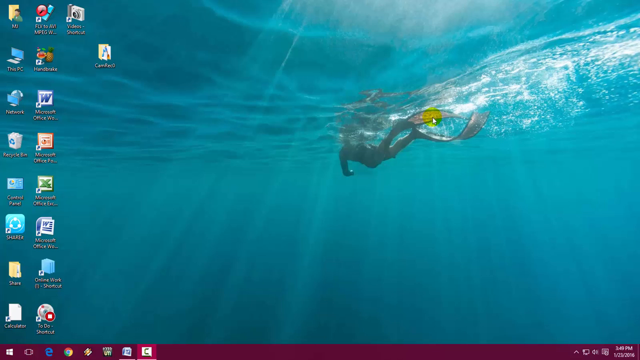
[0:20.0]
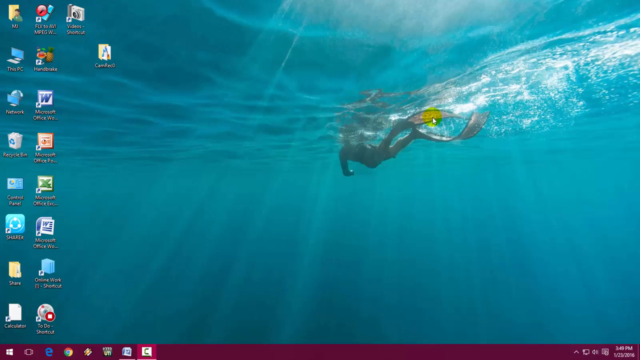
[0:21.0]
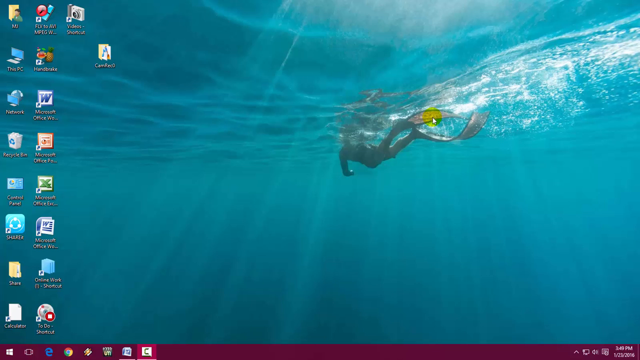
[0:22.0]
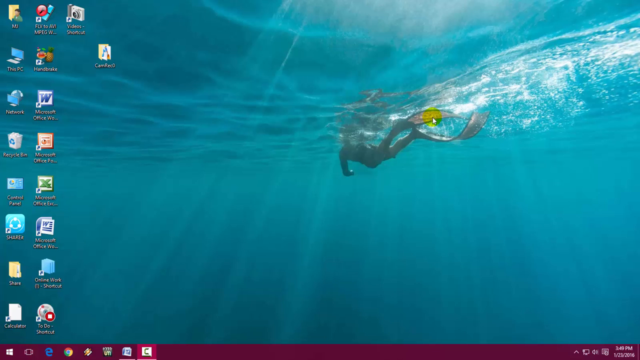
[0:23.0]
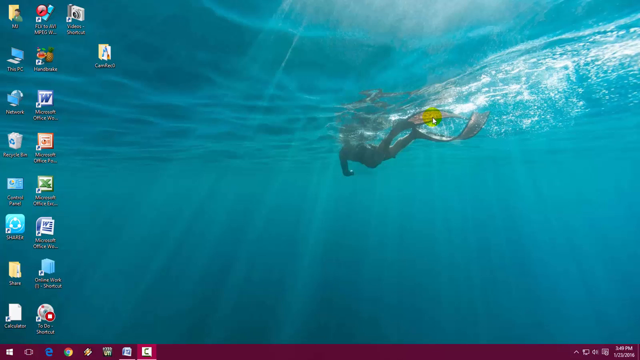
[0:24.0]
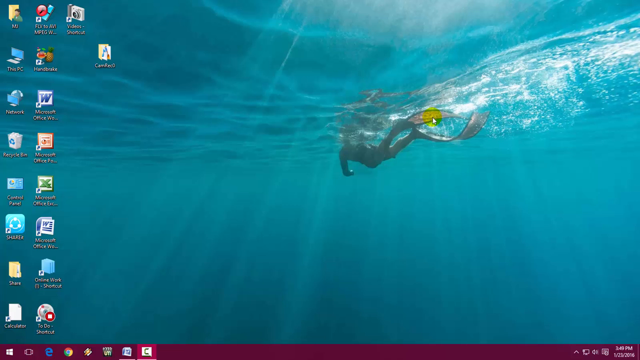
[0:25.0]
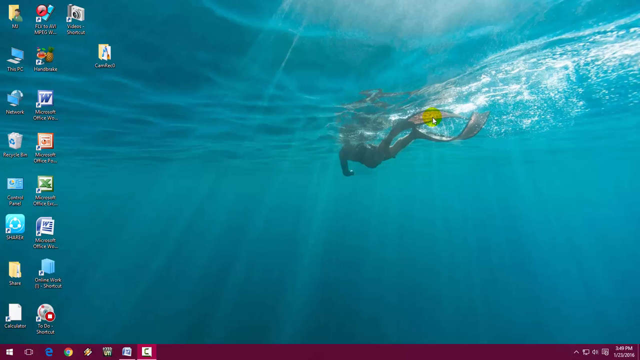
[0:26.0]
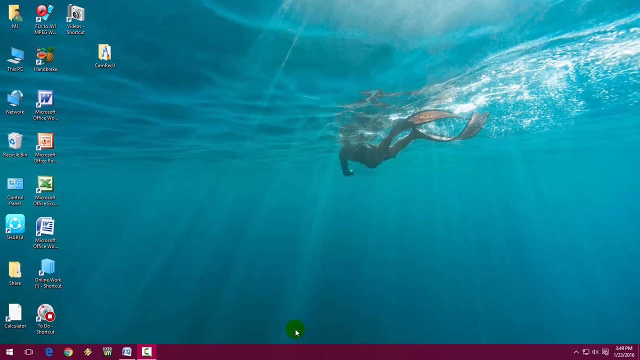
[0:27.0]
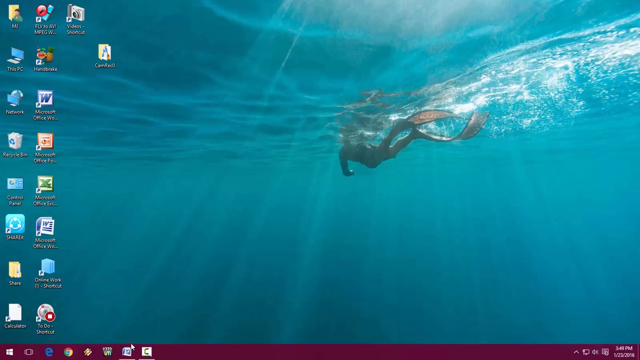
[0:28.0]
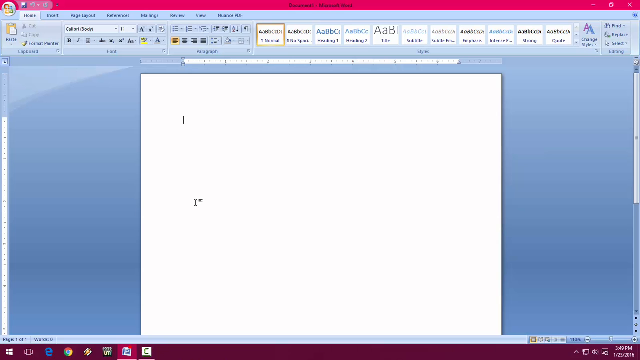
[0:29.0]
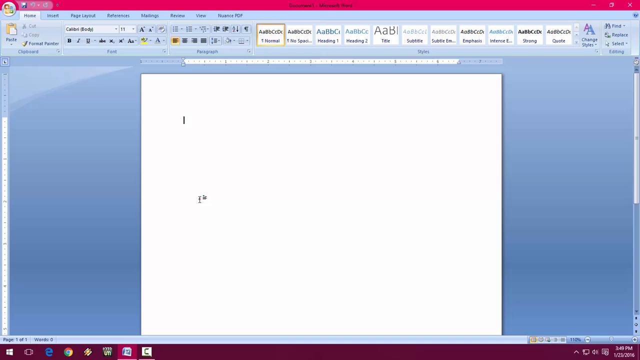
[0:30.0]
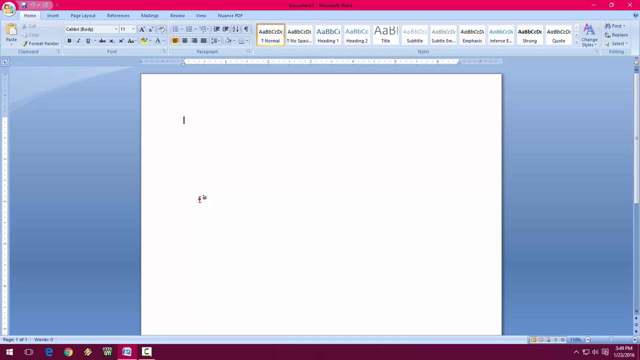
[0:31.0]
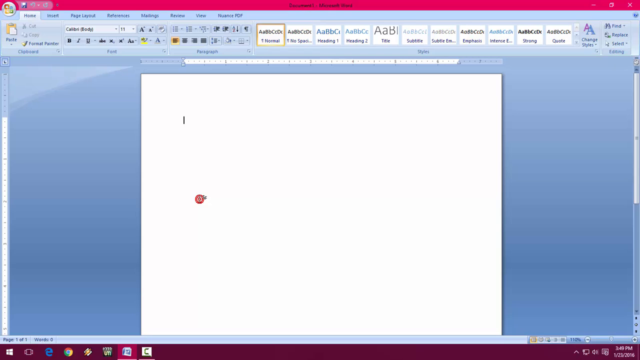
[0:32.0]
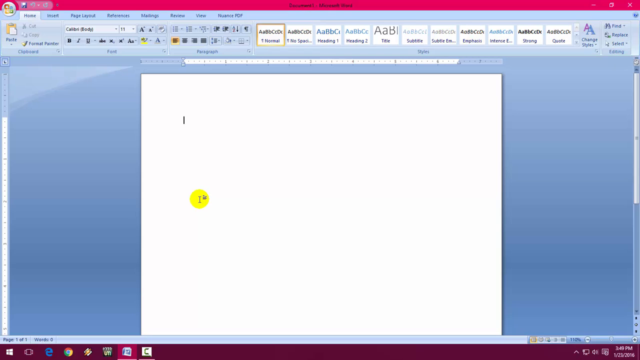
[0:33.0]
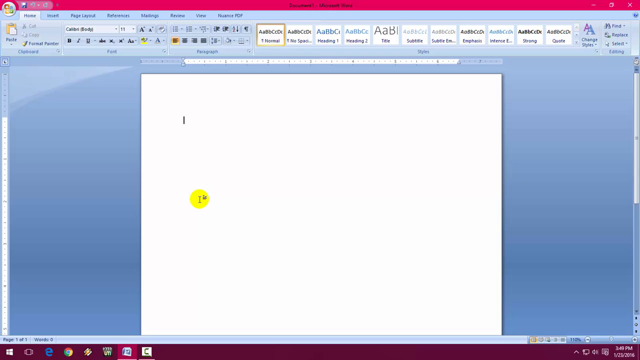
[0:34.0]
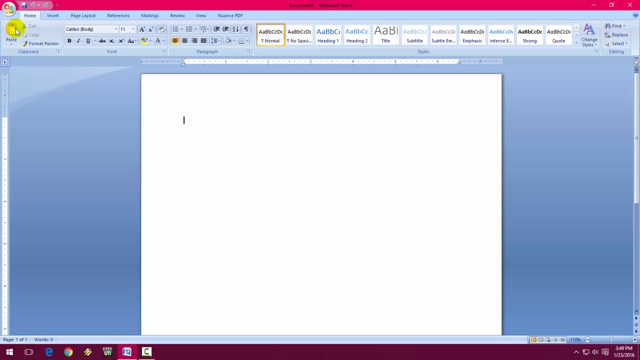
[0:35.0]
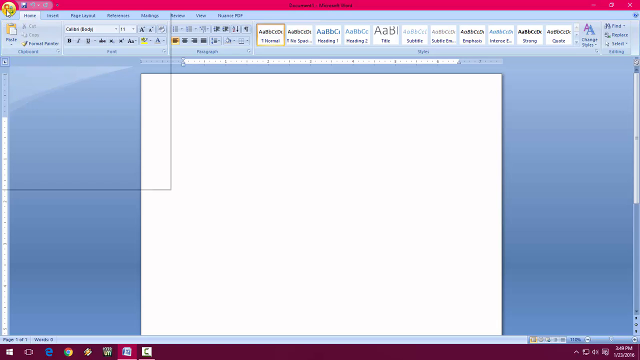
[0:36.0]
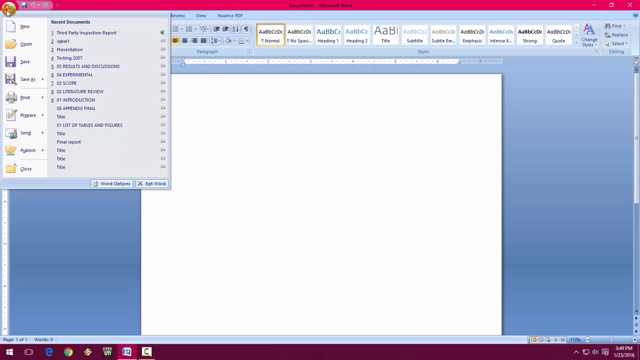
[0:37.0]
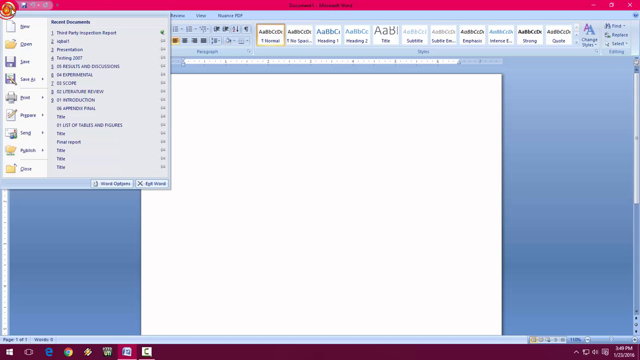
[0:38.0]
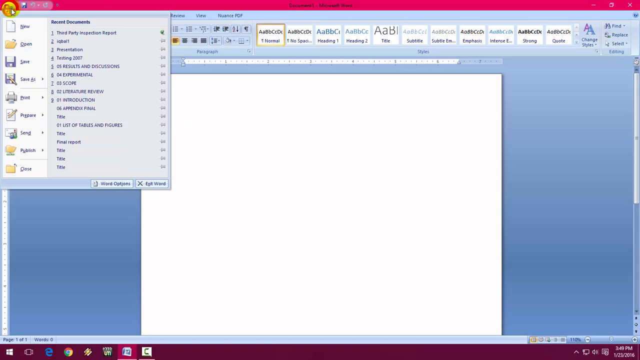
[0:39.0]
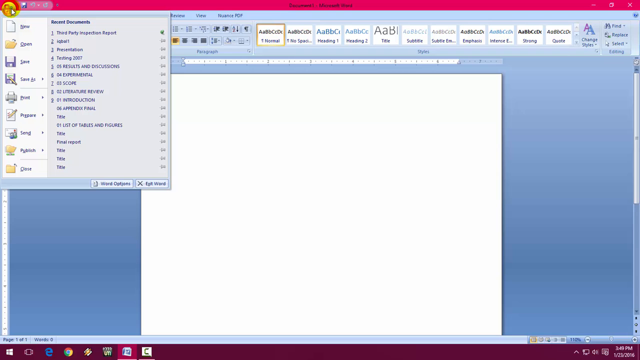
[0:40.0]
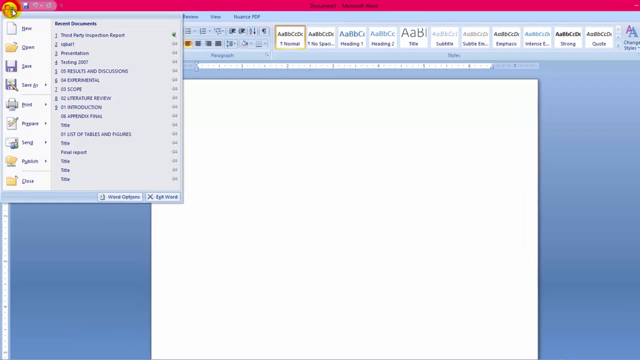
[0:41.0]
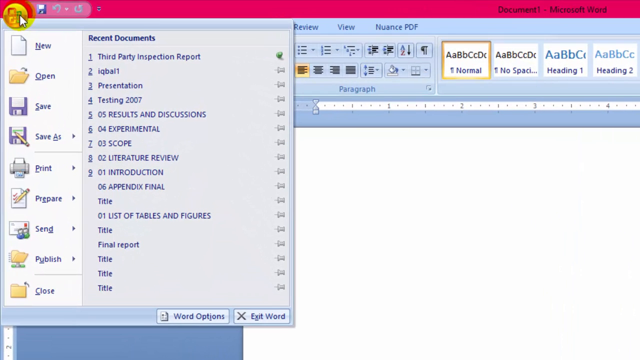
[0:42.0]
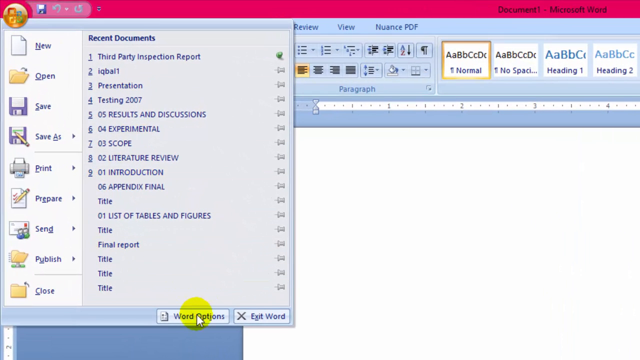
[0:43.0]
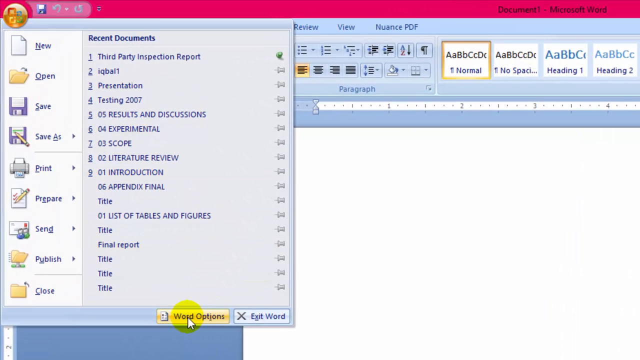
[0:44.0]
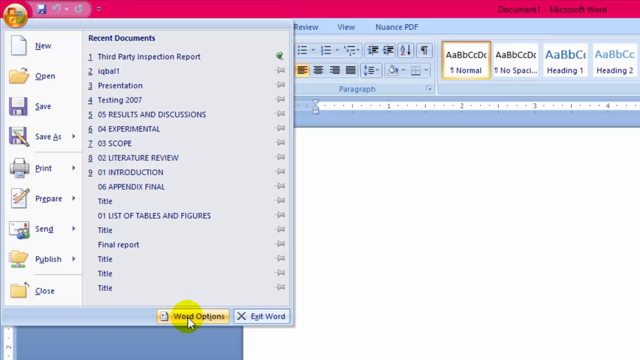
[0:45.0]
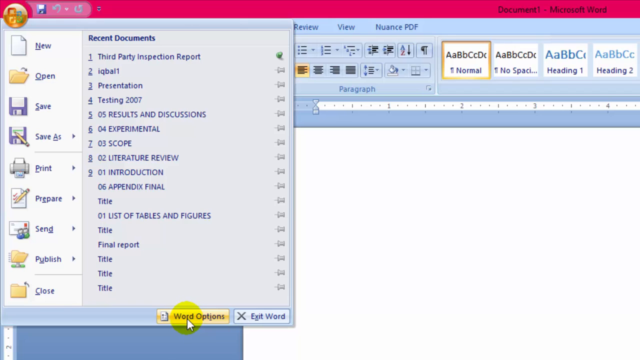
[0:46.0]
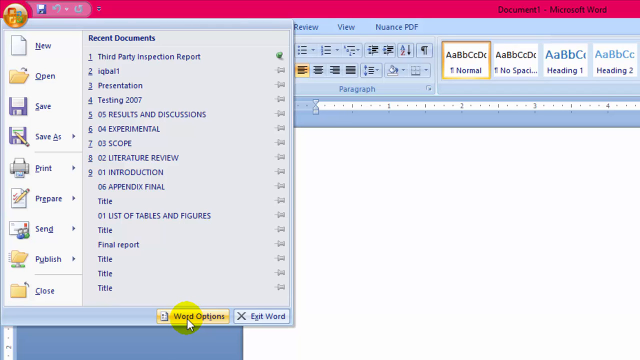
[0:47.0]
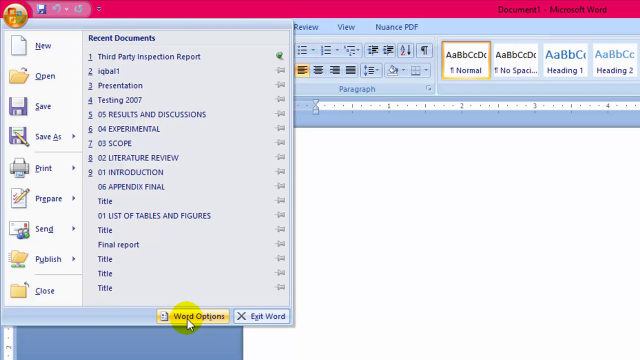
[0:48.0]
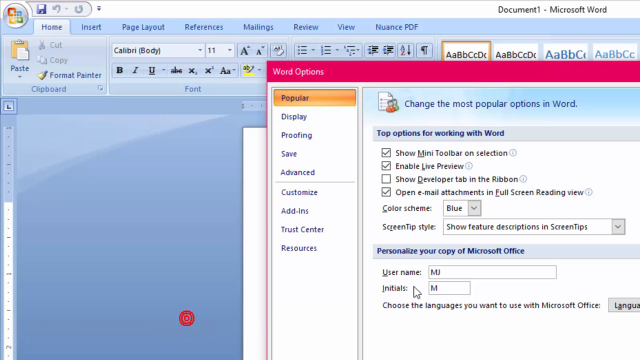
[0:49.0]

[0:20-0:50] The same desktop background is visible, with many icons on the desktop. The user has programs such as Word, PowerPoint and Excel, plus a few programs made to record the screen, so this seems to be some sort of tutorial. The background shows a diver swimming in clear waters. The user then opens Word, showing a blank page. The cursor has a yellow halo around it. The user moves to the upper left side of Word and clicks a button, apparently Office 365, which opens a new window with options such as new, open, save and save as. The user then goes to a button that reads "Word options" and clicks it, and a new window appears.